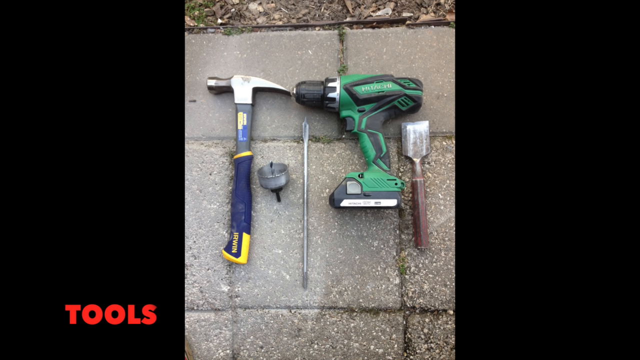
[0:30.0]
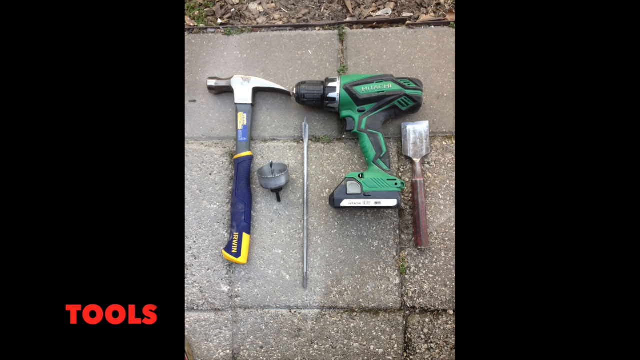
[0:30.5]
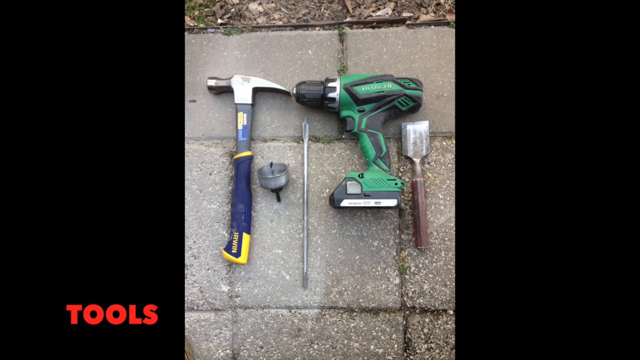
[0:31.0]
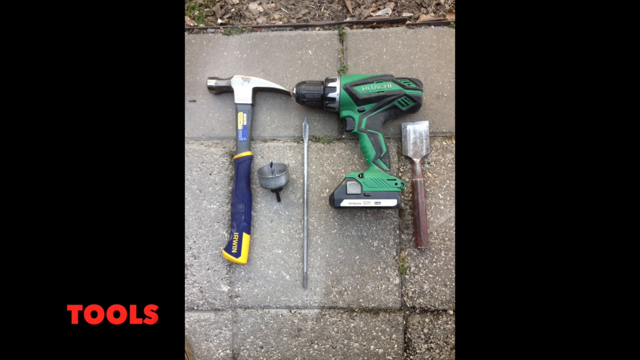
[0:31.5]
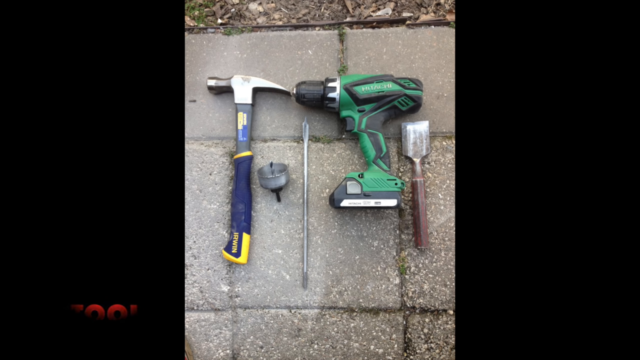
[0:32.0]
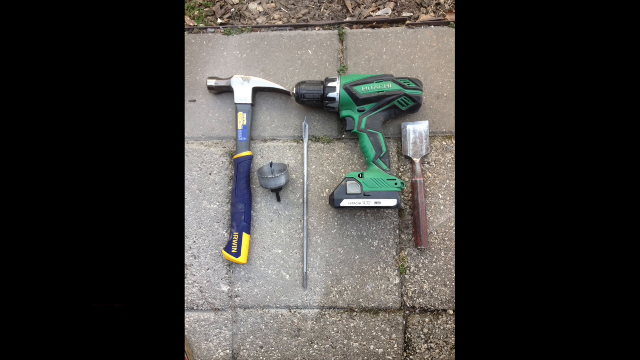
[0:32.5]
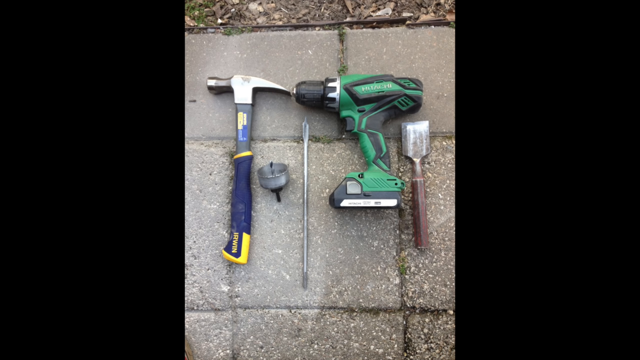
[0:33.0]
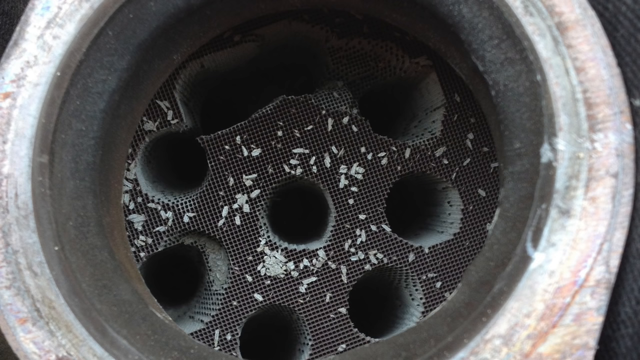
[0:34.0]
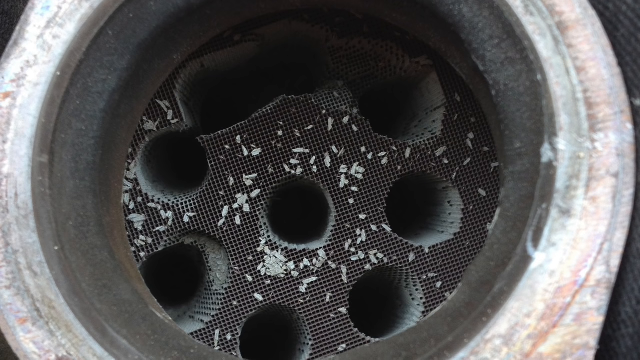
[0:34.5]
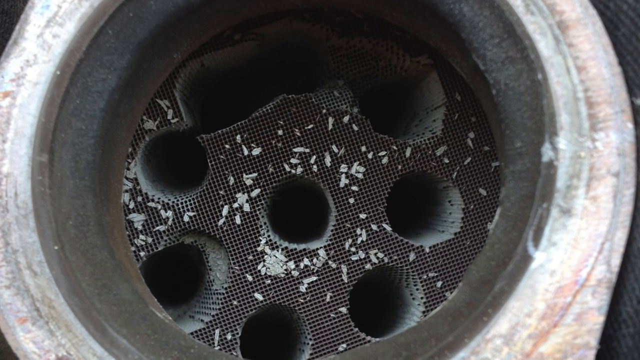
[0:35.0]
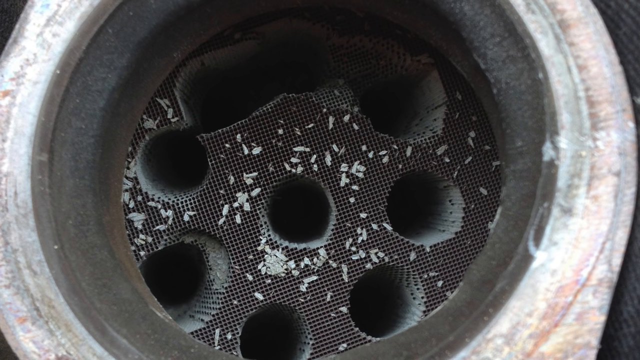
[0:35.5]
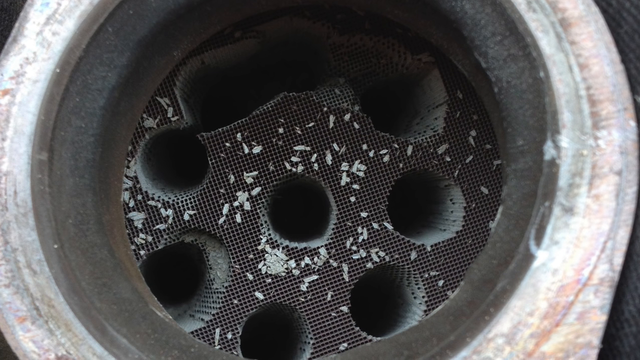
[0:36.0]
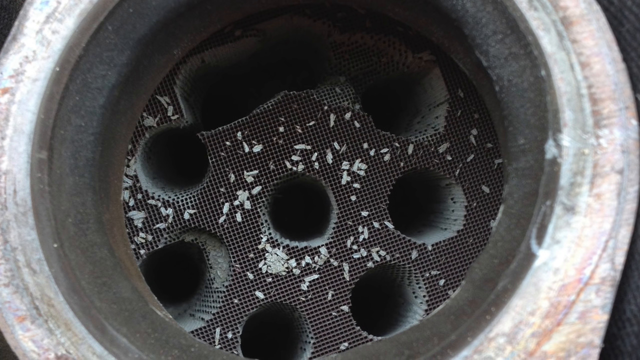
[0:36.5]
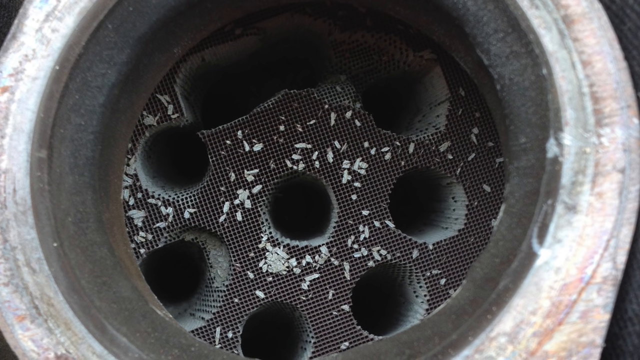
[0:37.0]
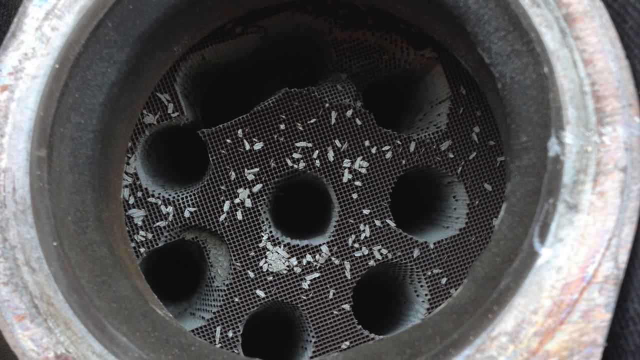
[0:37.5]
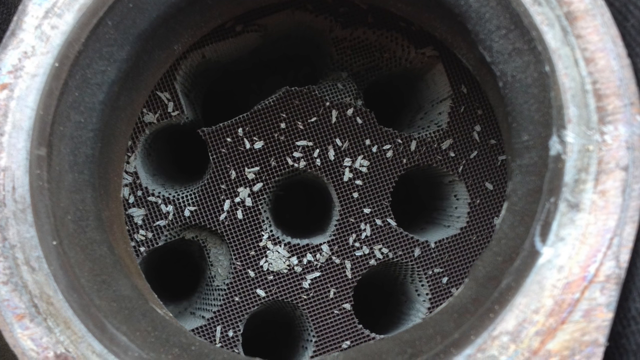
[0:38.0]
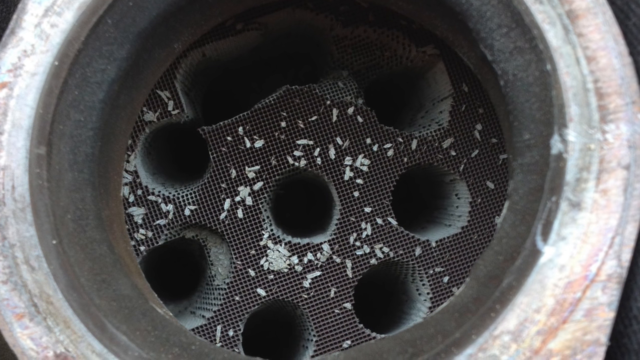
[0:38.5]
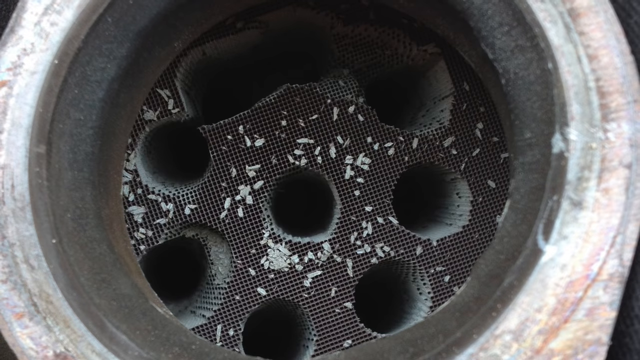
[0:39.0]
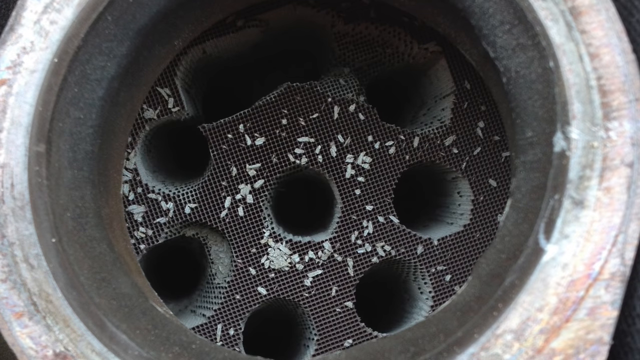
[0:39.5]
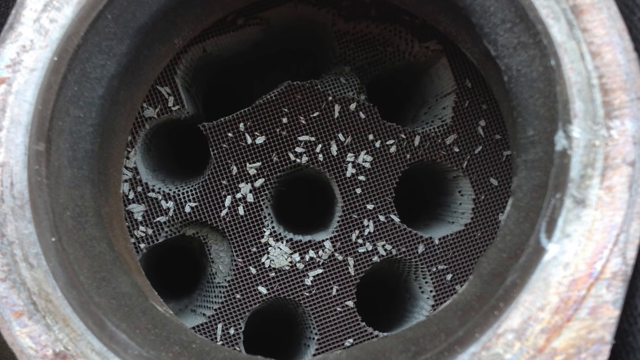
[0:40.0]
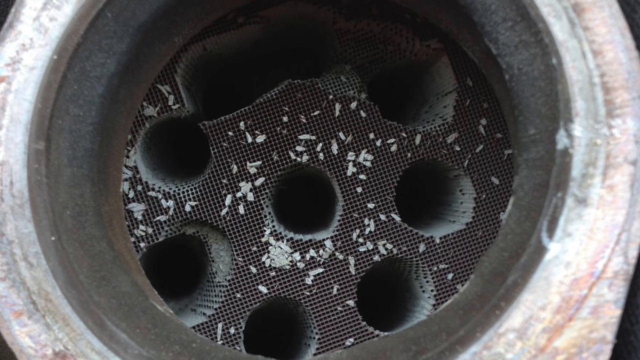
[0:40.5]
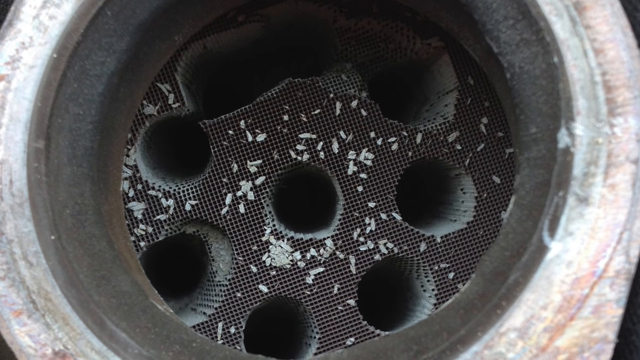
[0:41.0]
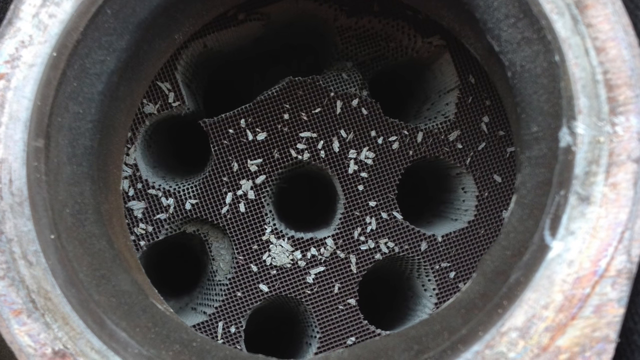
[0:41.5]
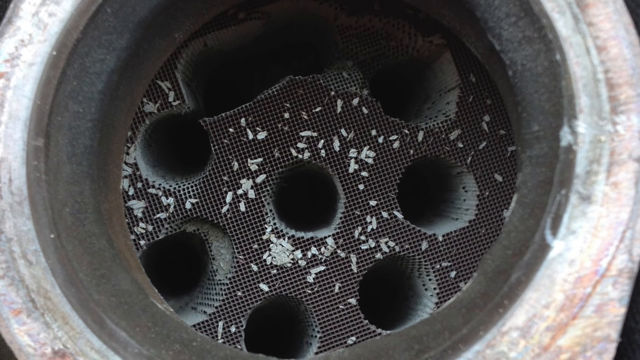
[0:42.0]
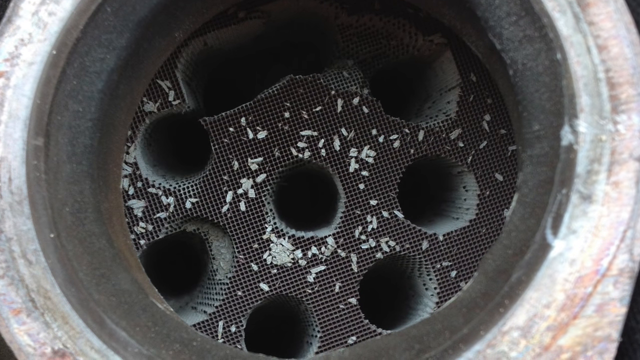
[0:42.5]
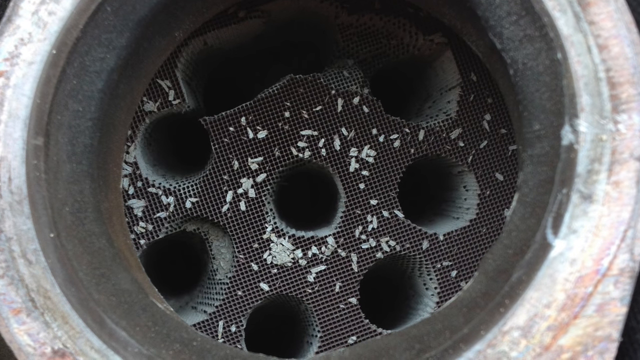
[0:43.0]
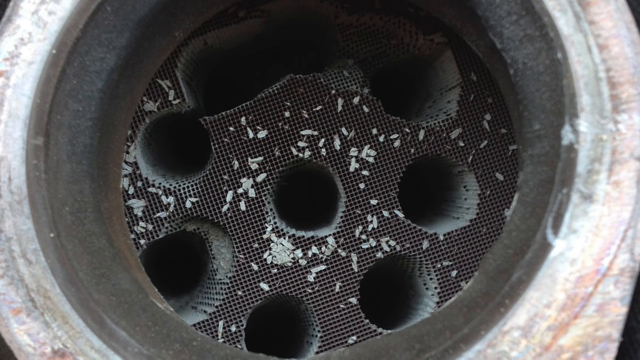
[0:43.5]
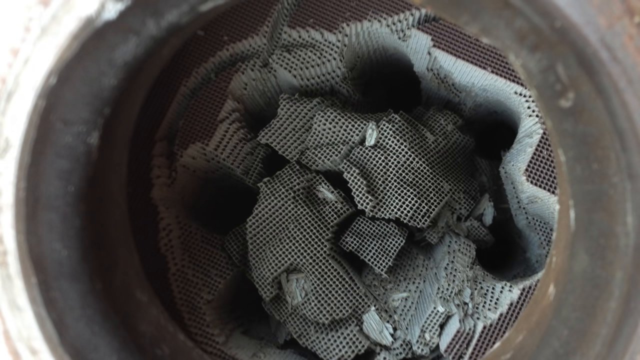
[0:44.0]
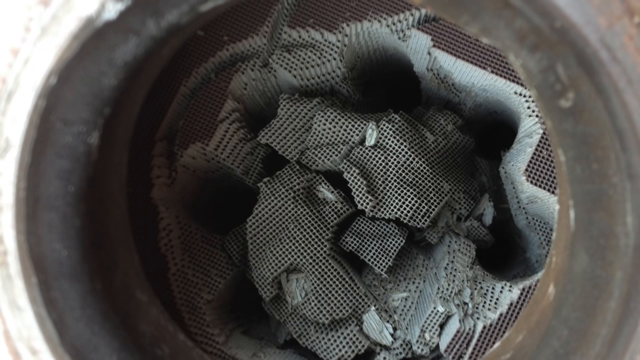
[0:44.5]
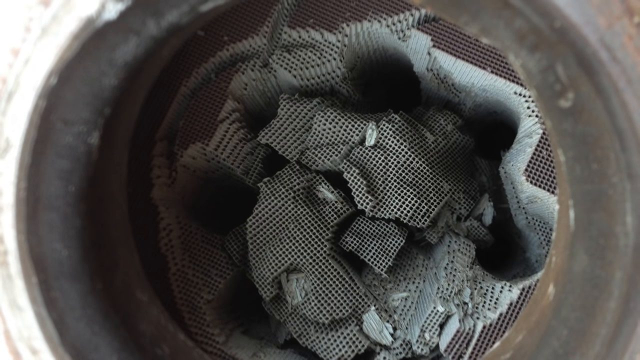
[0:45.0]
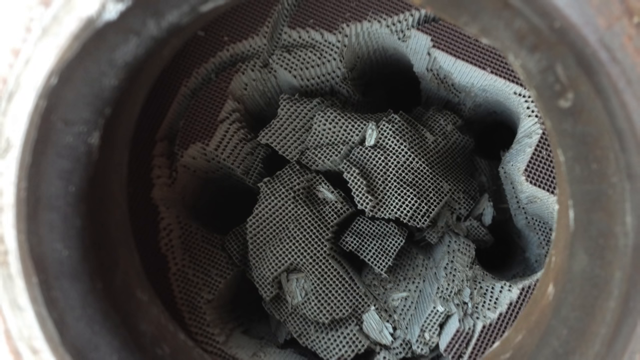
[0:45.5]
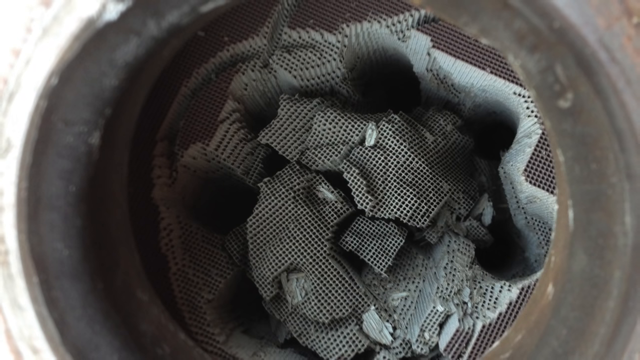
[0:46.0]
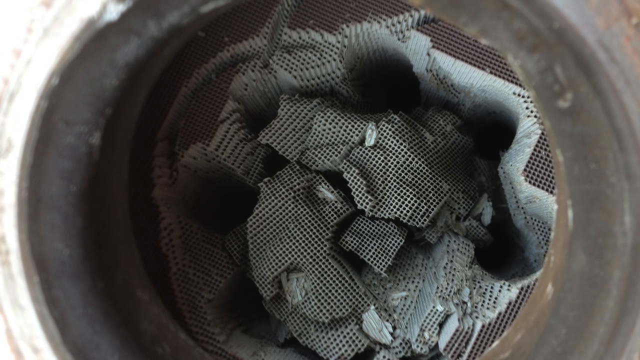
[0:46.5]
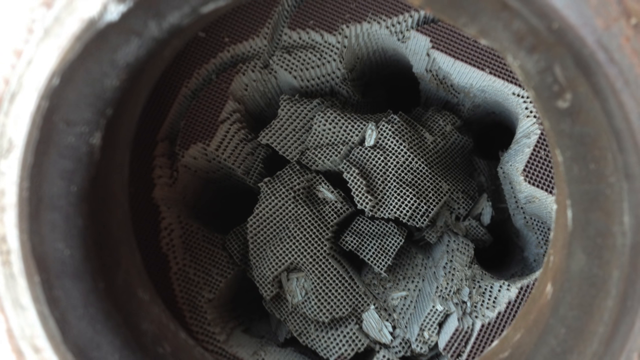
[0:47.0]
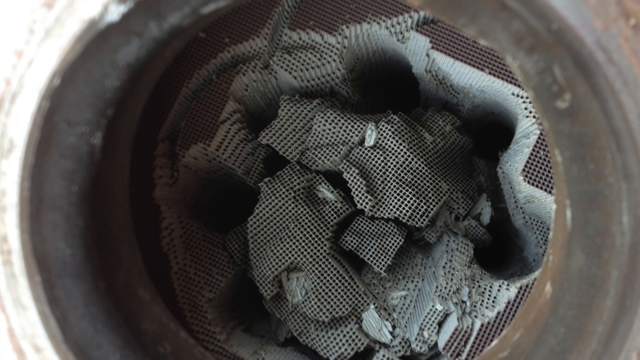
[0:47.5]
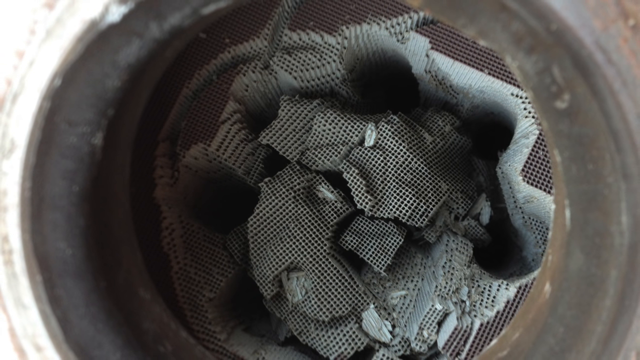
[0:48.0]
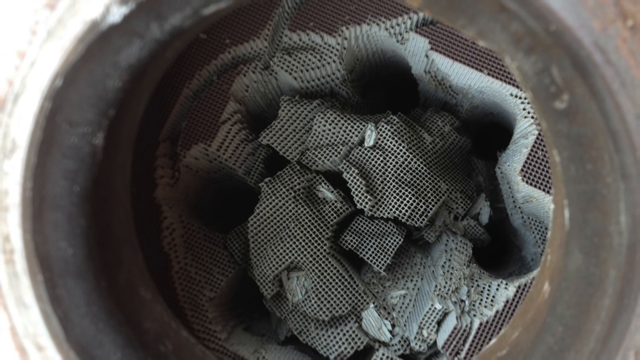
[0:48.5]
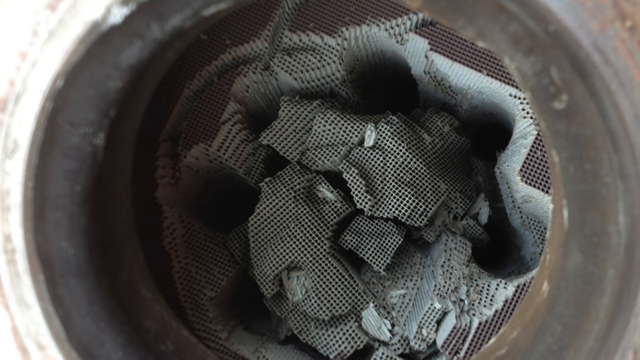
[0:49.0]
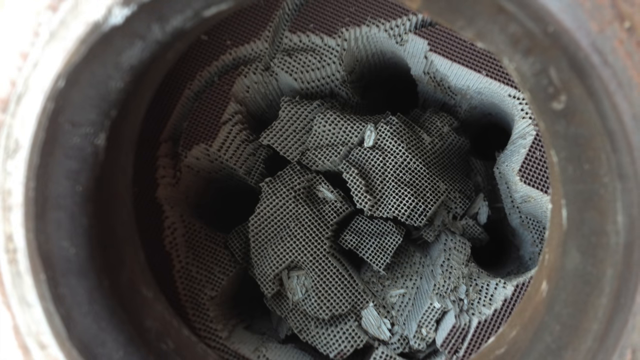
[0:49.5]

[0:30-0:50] Tools are lying on a sidewalk made of interlocking brick, with "Tools" written in red on the screen. There is a hammer, a drill bit and some other pieces of equipment; the power drill is green and the hammer is blue. The view then shows the inside of a round object, possibly a tire, which has a round piece inside with holes in it, some of which connect at the top. White debris is scattered by these holes inside the disc. Next comes something that looks like rope surrounded by textured paper and cloth, all grey and difficult to identify. The tools appear on the interlocking brick again, with grass at the edge of the brick.